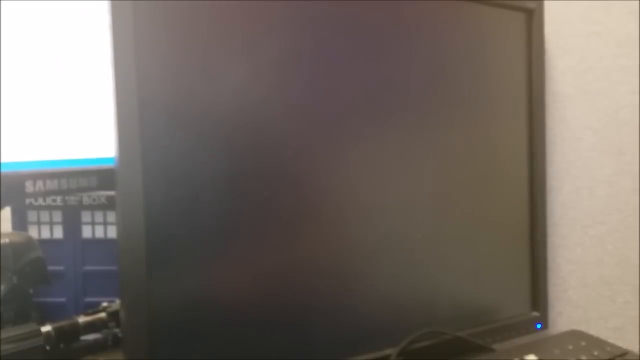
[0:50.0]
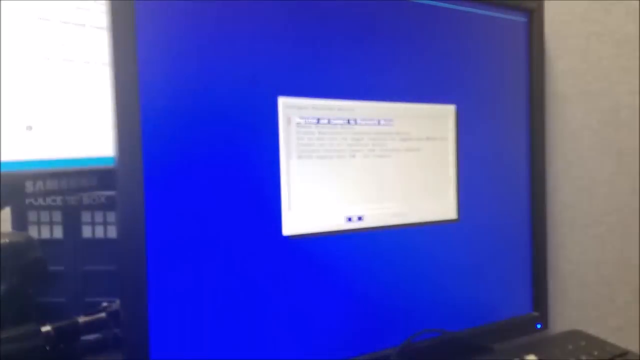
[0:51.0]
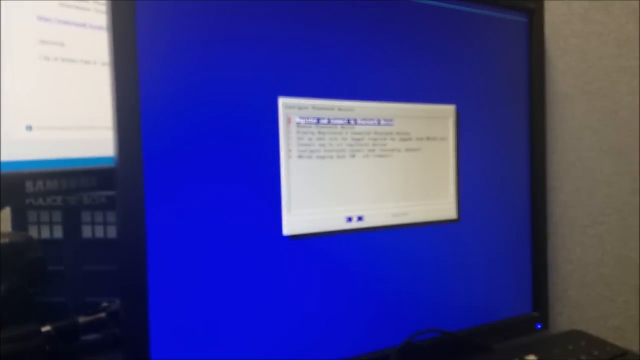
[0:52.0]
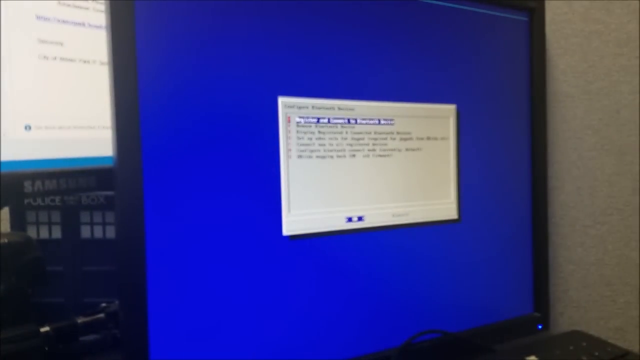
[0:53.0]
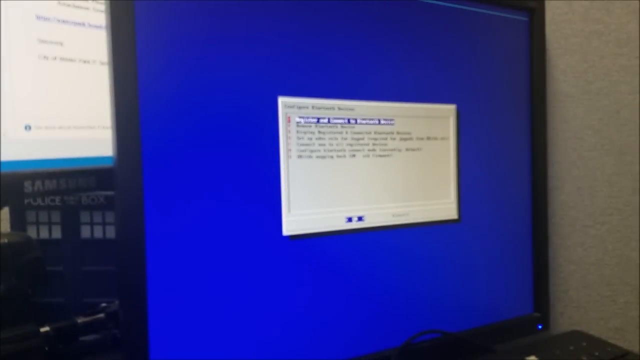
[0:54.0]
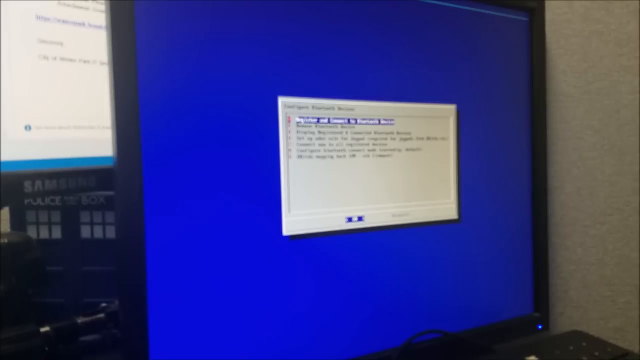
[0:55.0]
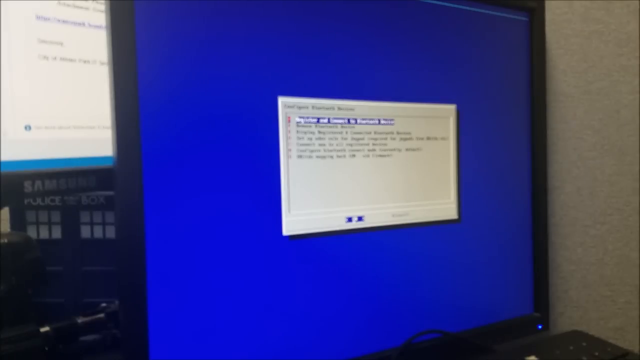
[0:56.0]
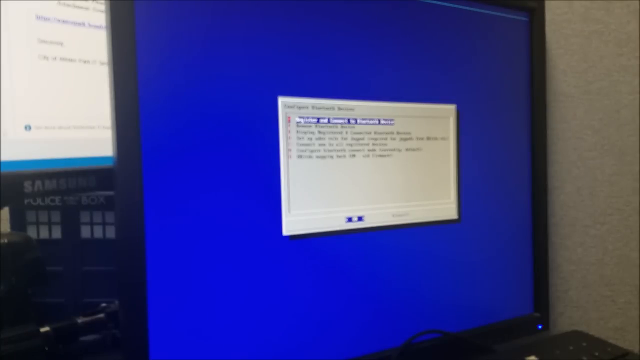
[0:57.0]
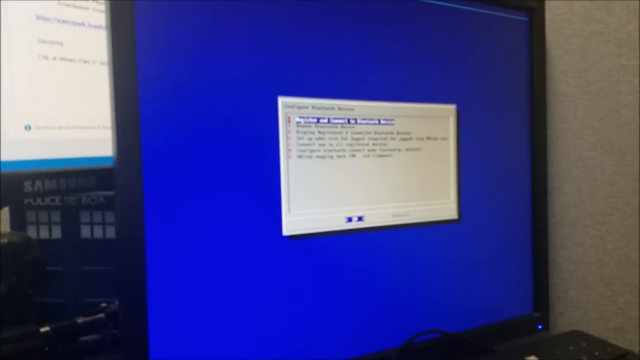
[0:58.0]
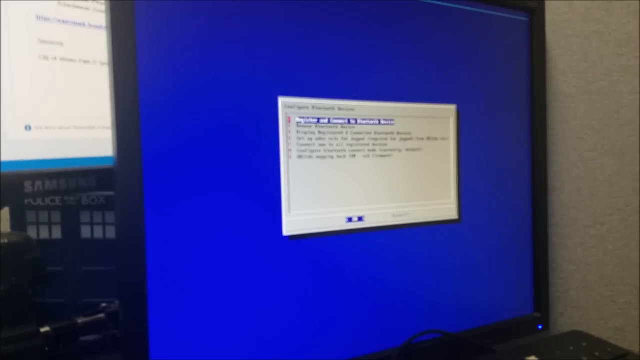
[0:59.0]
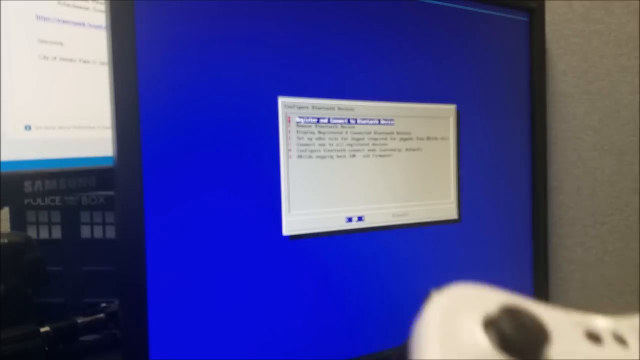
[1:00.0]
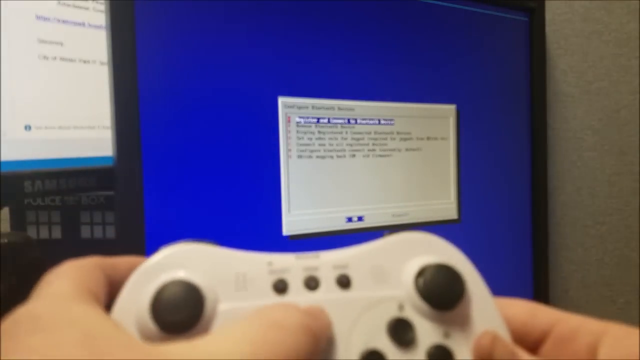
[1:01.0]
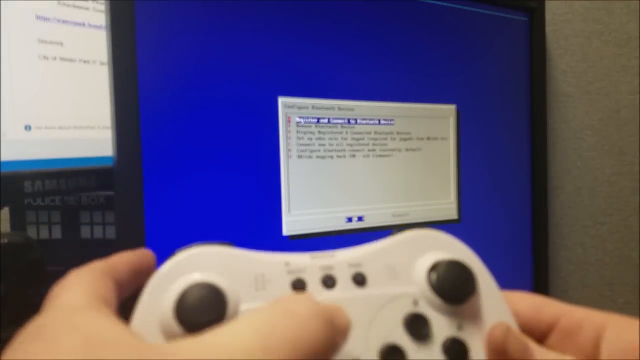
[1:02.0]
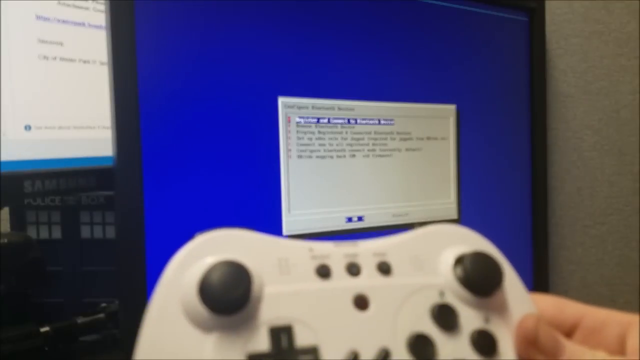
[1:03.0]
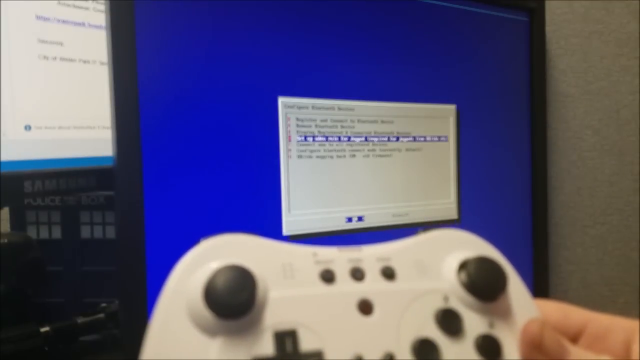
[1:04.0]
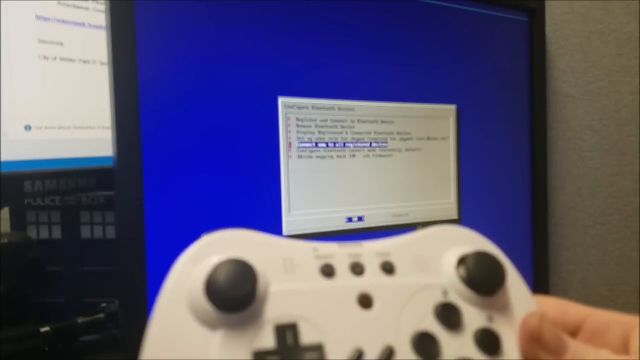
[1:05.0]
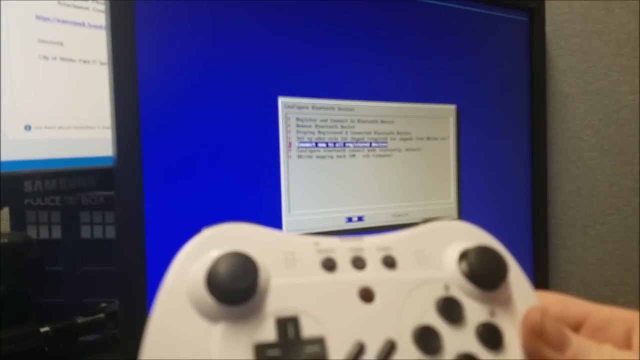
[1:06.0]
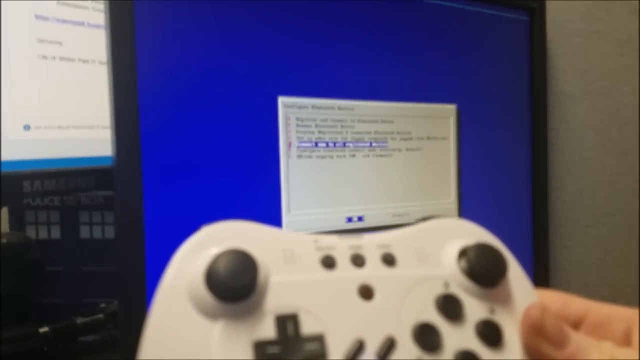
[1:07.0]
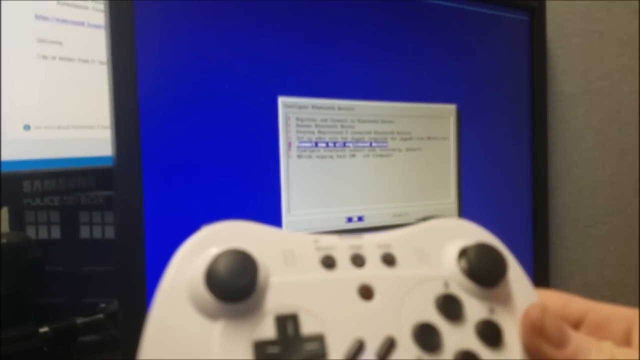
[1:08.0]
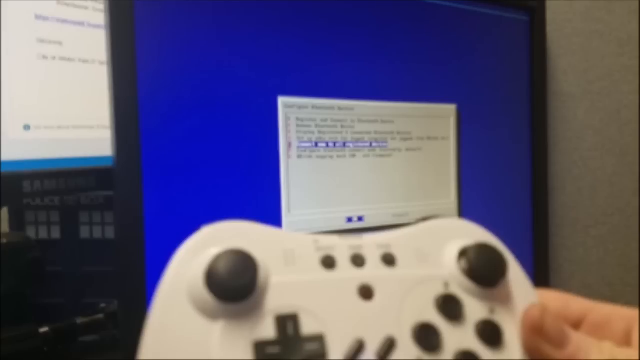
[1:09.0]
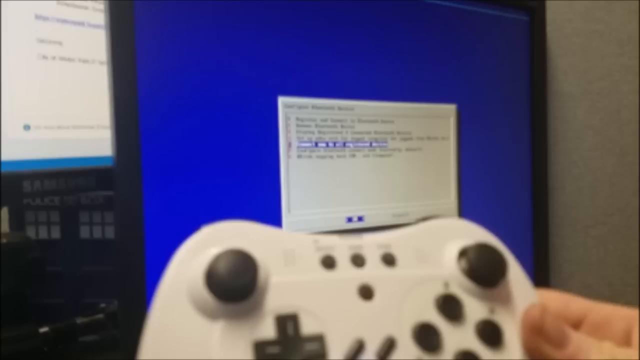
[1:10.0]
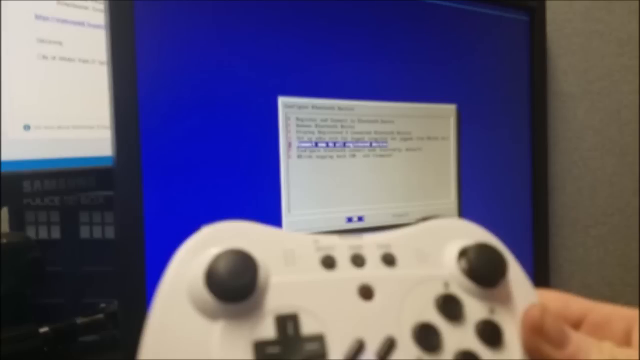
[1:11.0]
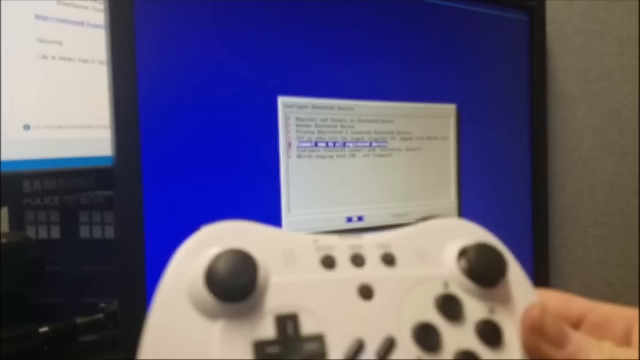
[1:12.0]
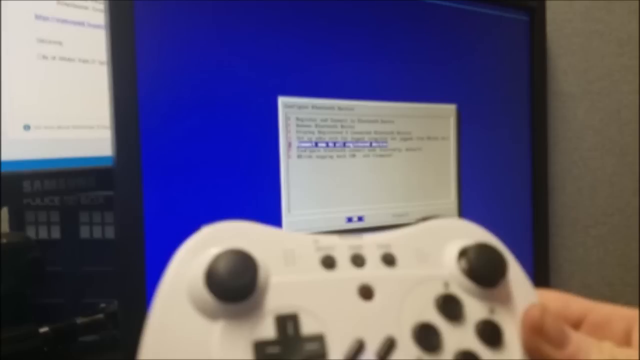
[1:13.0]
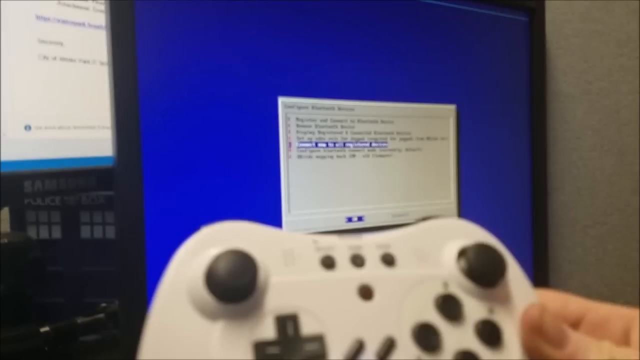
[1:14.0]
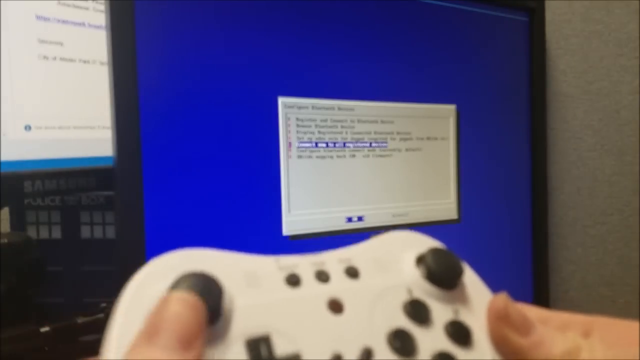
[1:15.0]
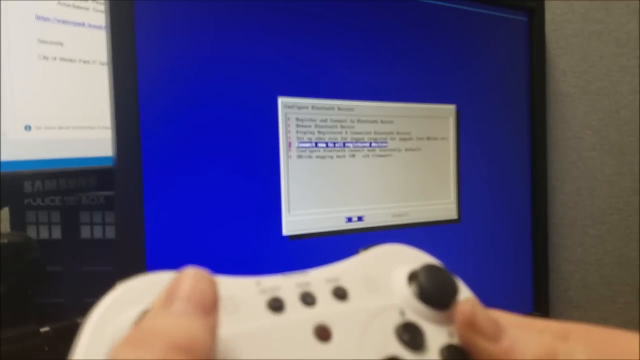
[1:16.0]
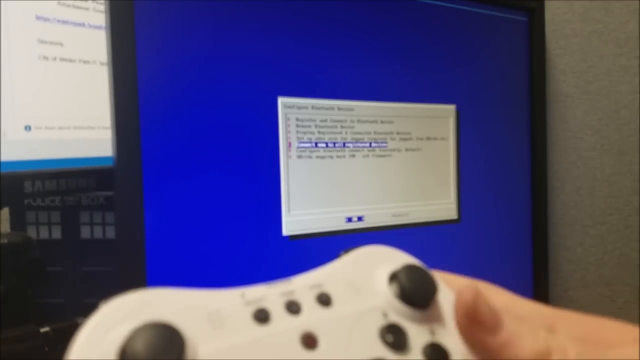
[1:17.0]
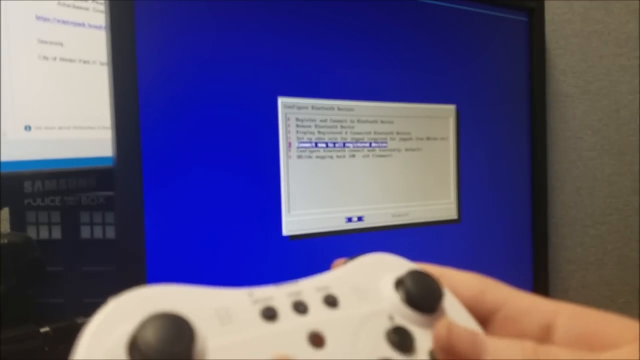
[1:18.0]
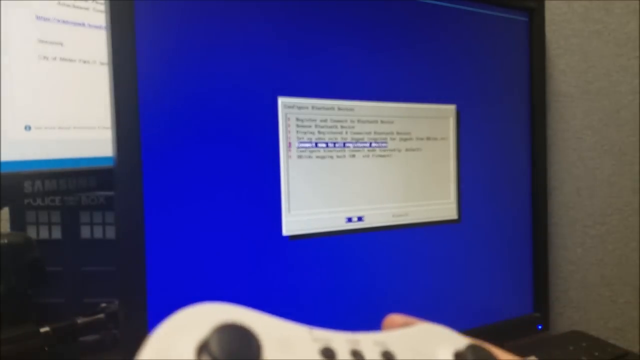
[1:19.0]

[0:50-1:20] The scene appears to be inside a cubicle, with the textured cubicle wall on the right and what appears to be a desk. A portion of a black keyboard is visible, along with the main object, a black computer monitor that is off, with its blue indicator light at the bottom. Behind it is another computer screen, a Samsung, and behind that are two blue doors with the words "police box" over the top of them. On the desk is a black Darth Vader head with what appears to be a tripod lying in front of it. The computer screen turns on, and its screen is blue with a pop-up box in the middle. A person's hand holds the game controller in the frame. A line in a section of the pop-up box is highlighted, and there is a button at the bottom left. The person begins to push buttons on the controller, and then the screen goes black.